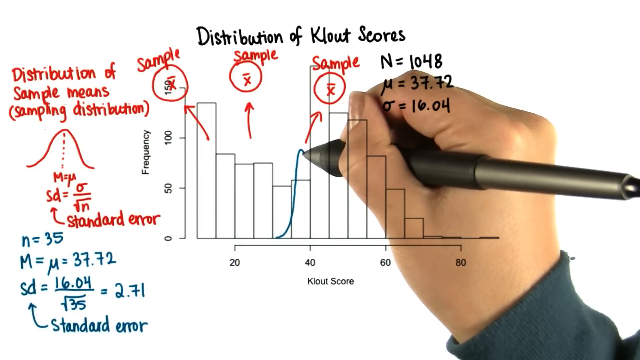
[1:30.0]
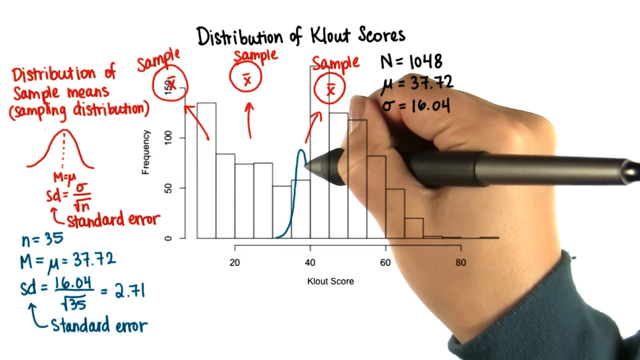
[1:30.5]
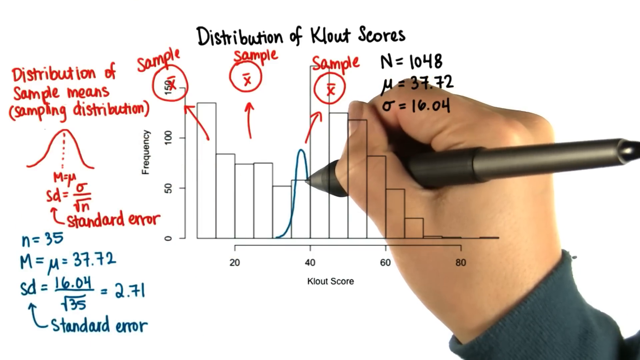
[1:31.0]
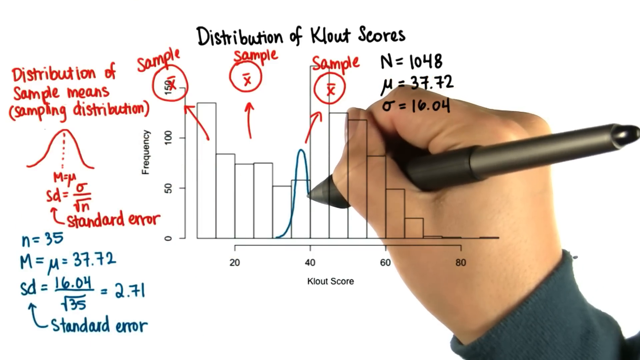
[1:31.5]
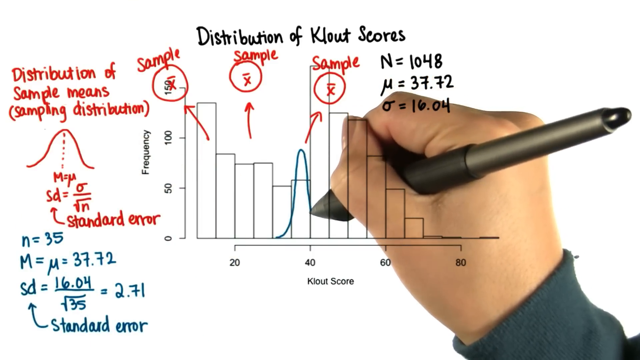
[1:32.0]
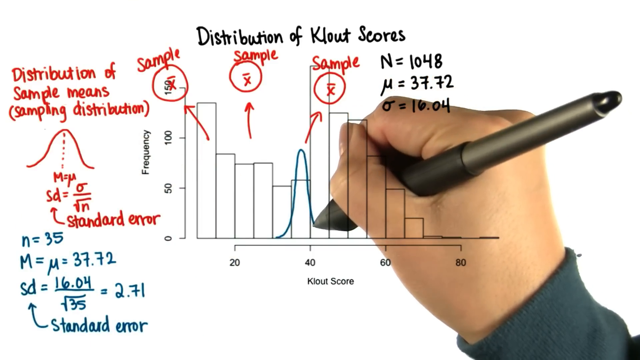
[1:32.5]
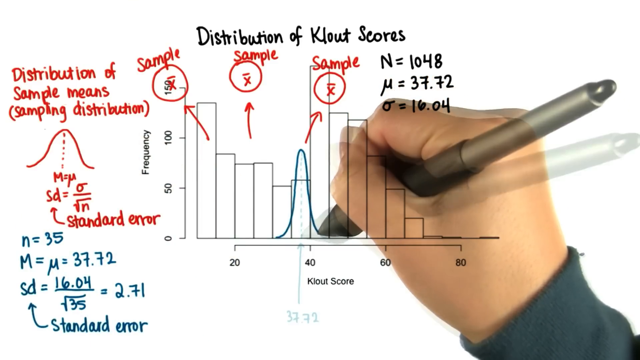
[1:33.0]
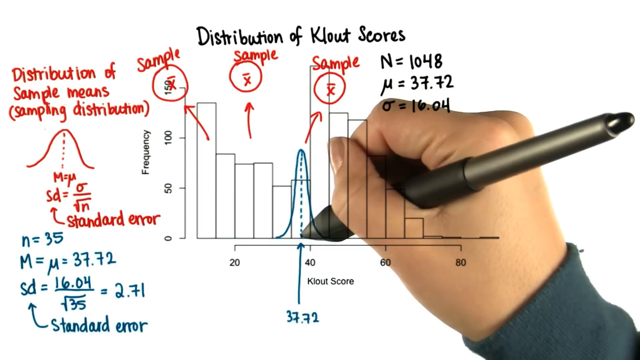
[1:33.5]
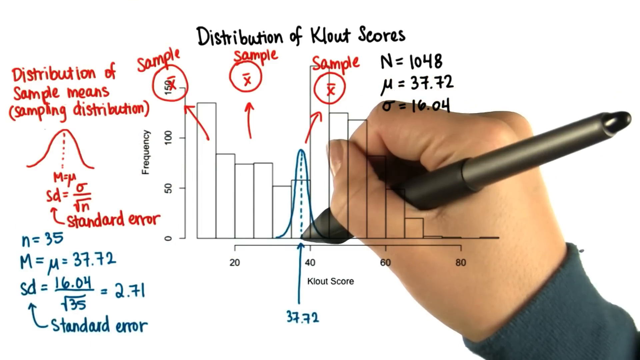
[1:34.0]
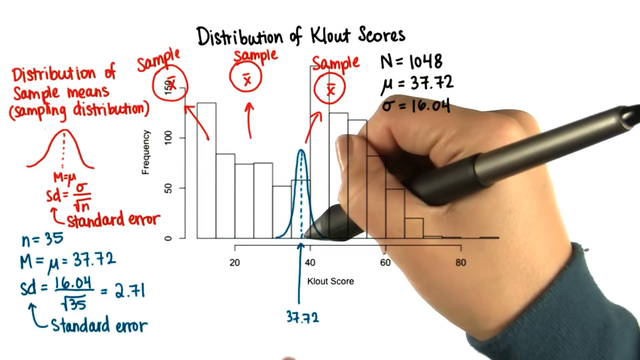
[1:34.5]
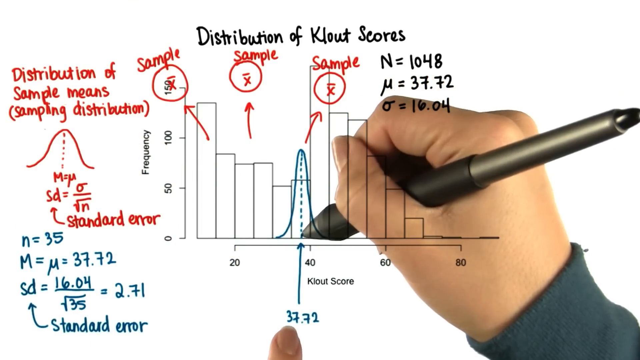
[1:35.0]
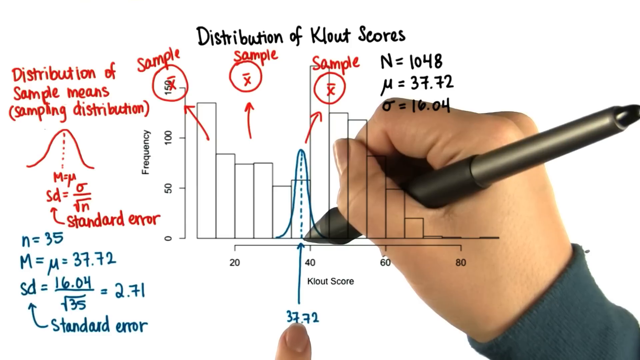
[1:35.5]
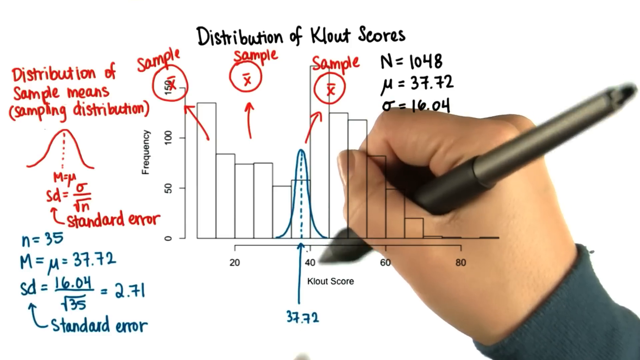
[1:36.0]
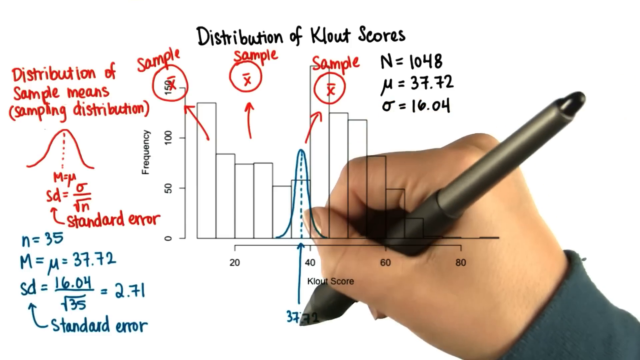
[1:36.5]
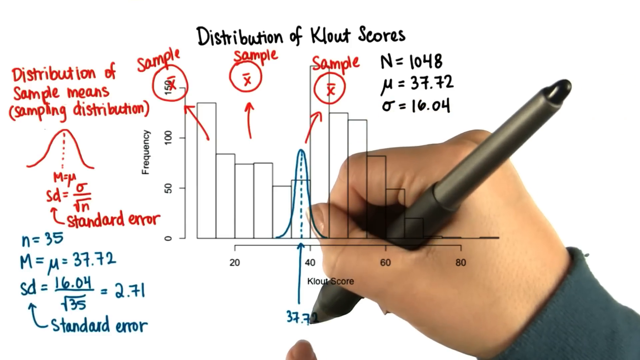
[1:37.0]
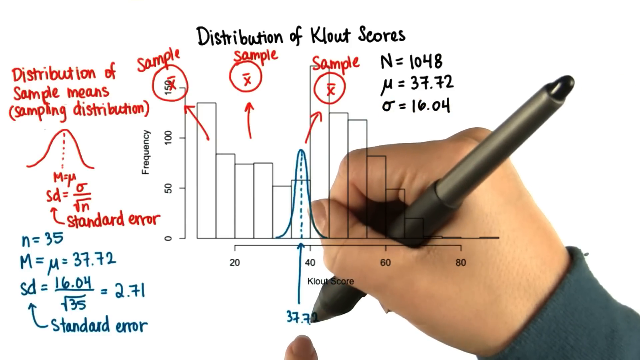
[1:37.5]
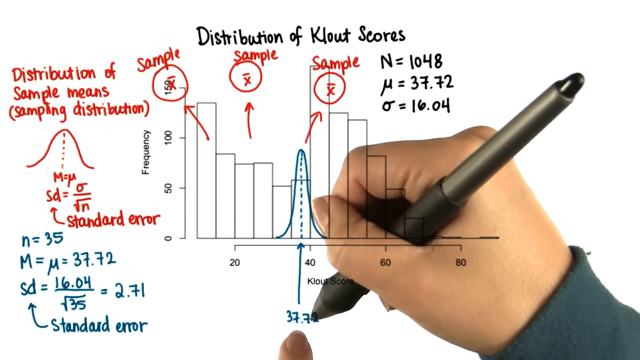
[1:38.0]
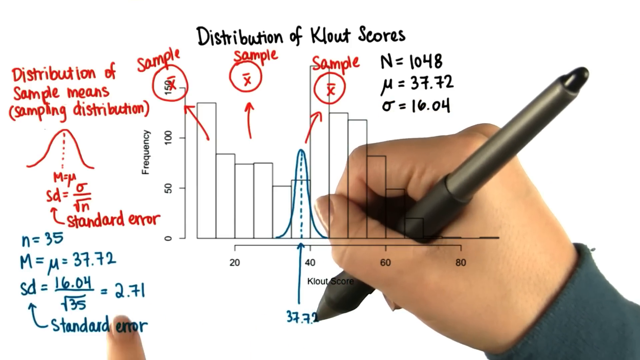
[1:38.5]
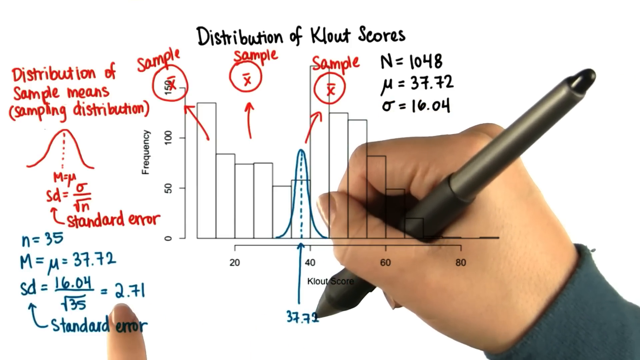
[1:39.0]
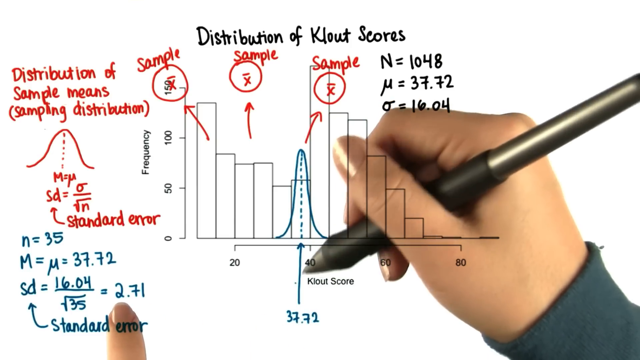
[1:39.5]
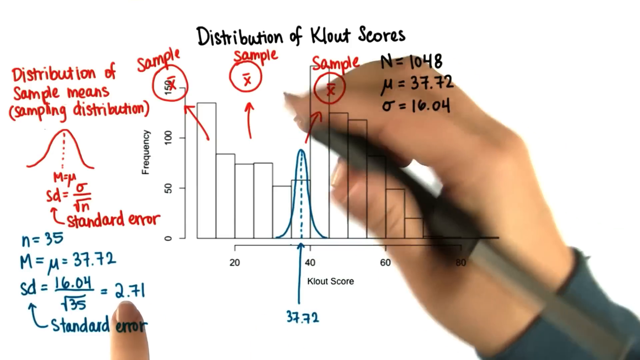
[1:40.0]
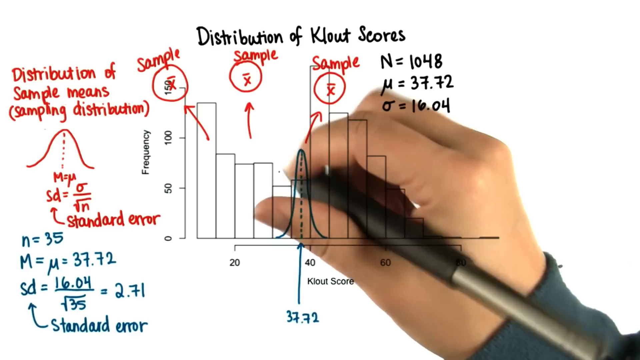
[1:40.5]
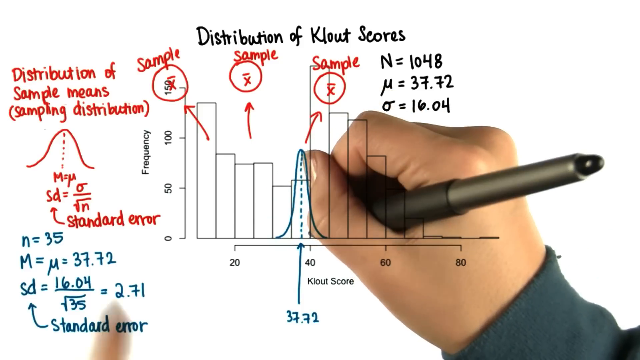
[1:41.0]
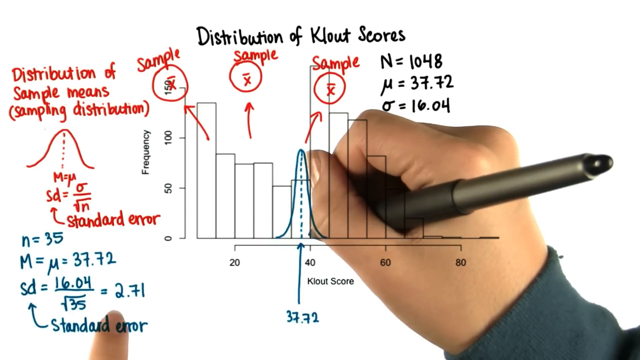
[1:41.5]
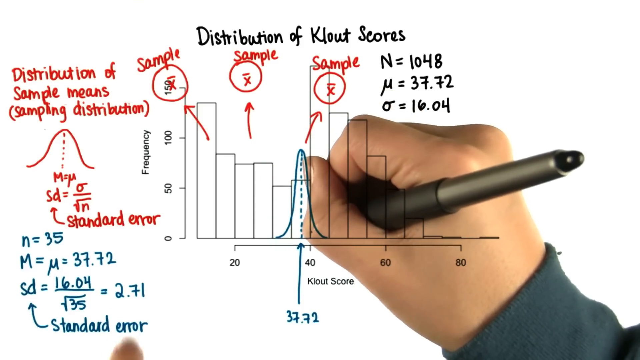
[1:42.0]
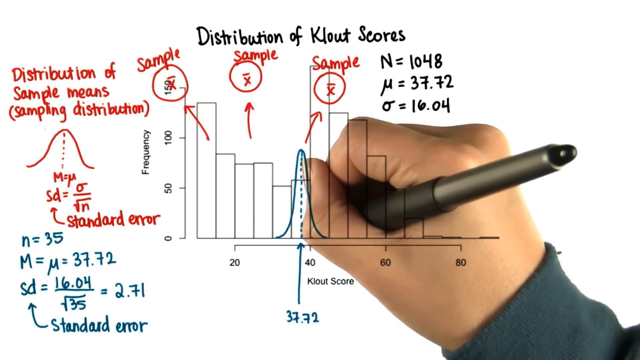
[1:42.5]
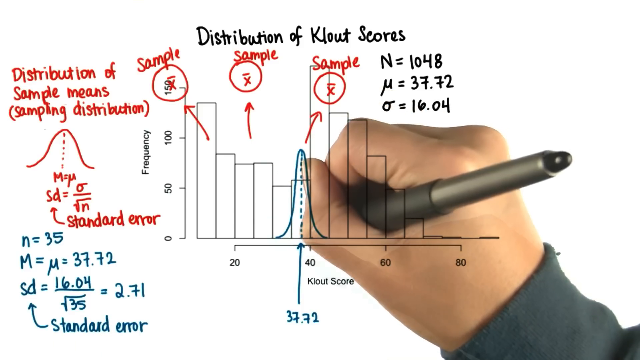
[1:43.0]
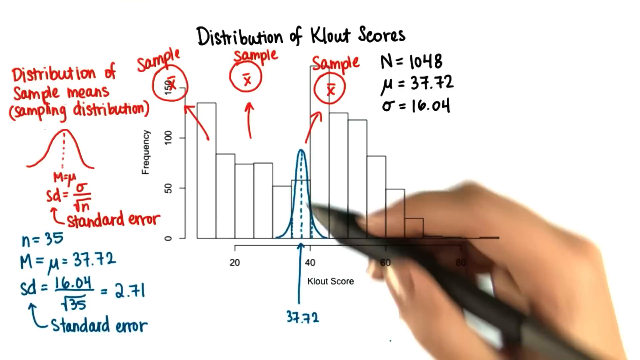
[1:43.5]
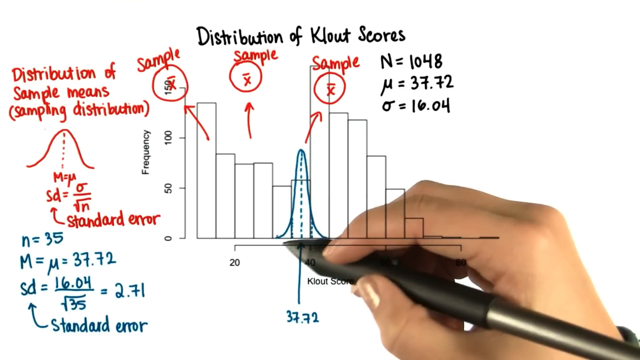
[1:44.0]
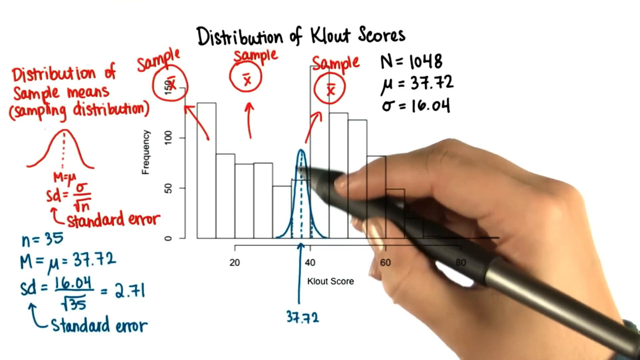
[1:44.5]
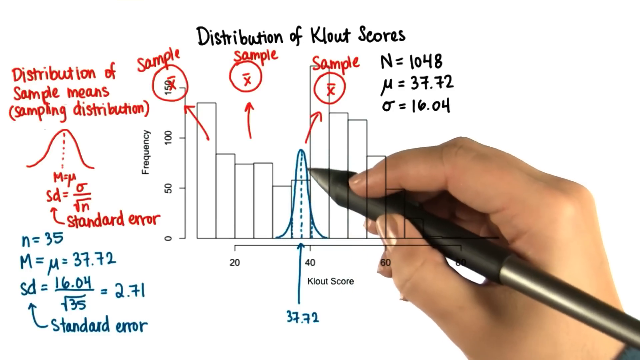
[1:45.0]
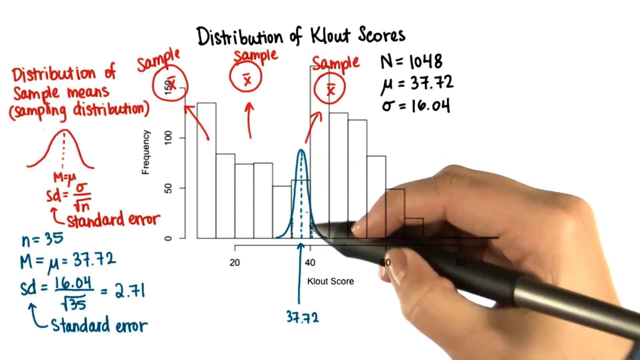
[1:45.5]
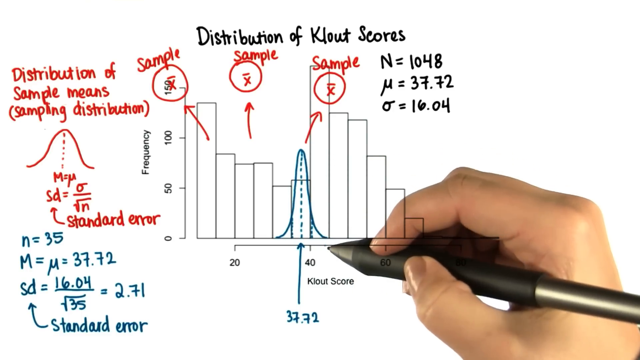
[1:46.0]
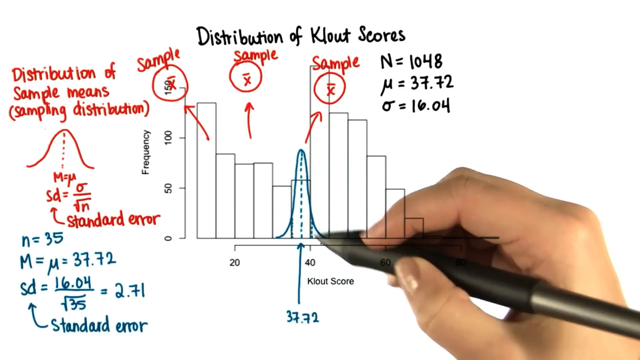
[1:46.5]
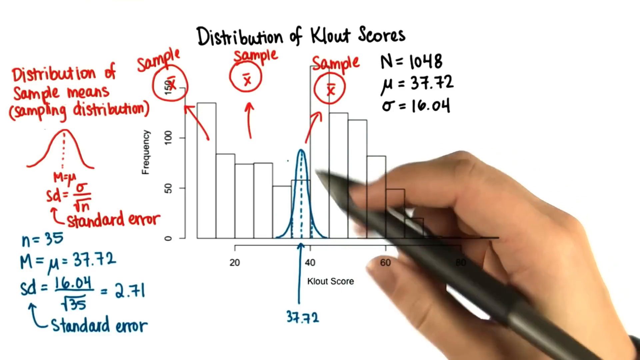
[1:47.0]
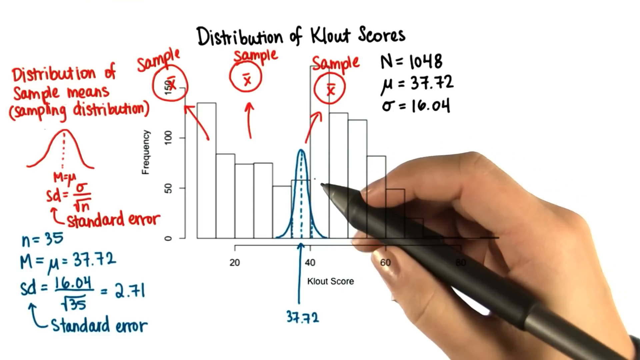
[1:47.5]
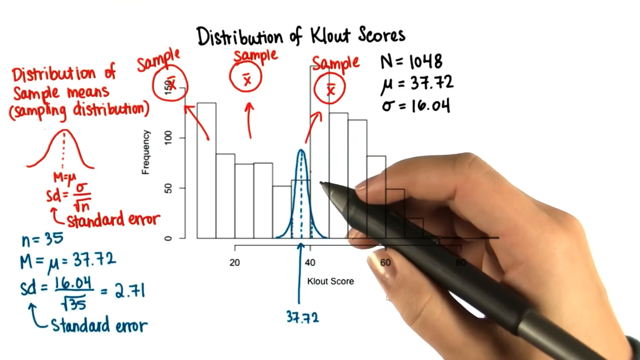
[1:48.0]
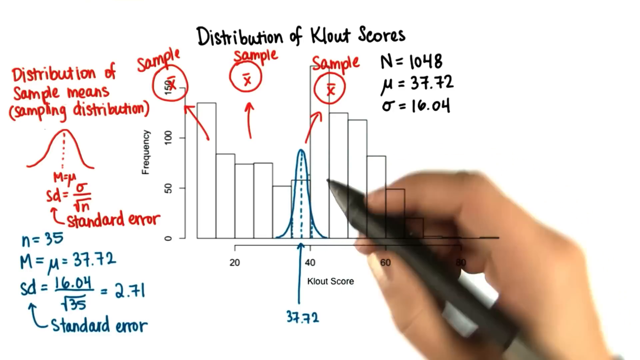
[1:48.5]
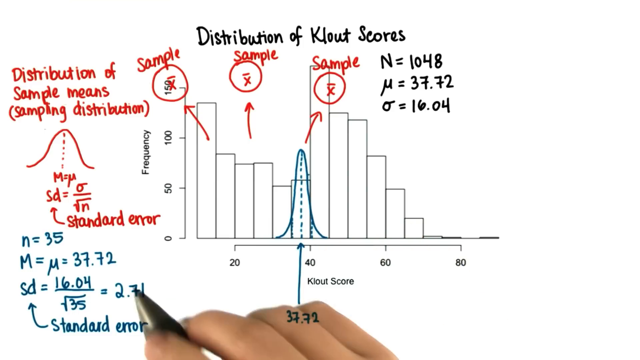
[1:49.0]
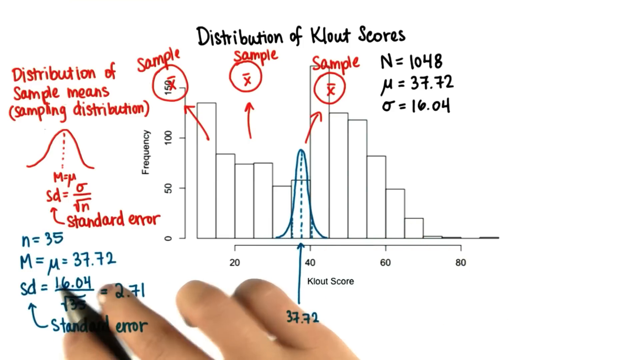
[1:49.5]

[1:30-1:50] The graph titled "distribution of clout scores" is on the white background, with frequency on the vertical axis going up by 50 and clout on the horizontal axis going up by 20. The black writing of what n, u and the O with a line equal remains, along with the red arrows going left, right and center to circles with an X with a line over it labeled "sample," the "distribution of sample means" bell graph, and the formula SD equals the circle with a line going to the right divided by the square root of n. The blue writing "n = 35" and "m =" lowercase u "= 3772" is still there. Without showing her writing it, the words "standard of error" appear in blue underneath the formula giving 2.71, with a blue arrow going to SD. She finishes her bell curve on the chart, starting just past 20 and ending as 40 ends, with a dotted line going all the way down and an arrow going up from the bottom, where she writes "37.72." She points with her left hand at 2.71, makes some unclear additional markings on the bell graph, retraces it, and goes back to the numbers on the left.